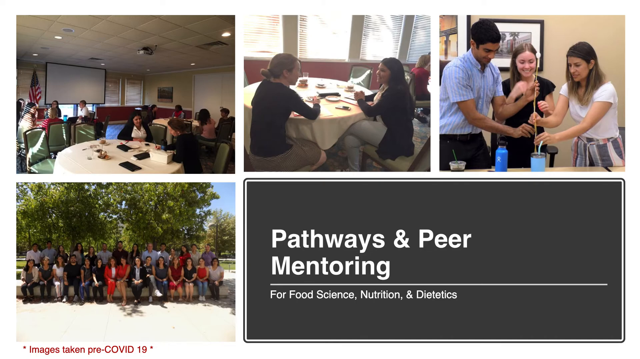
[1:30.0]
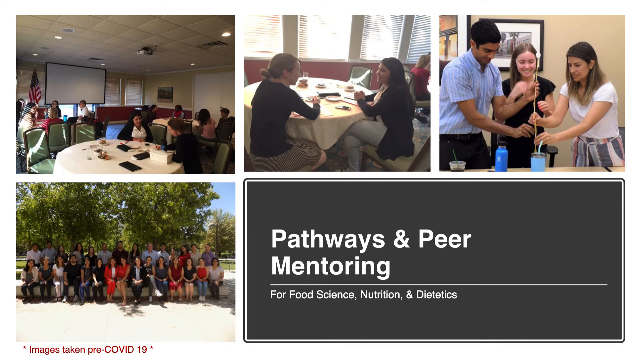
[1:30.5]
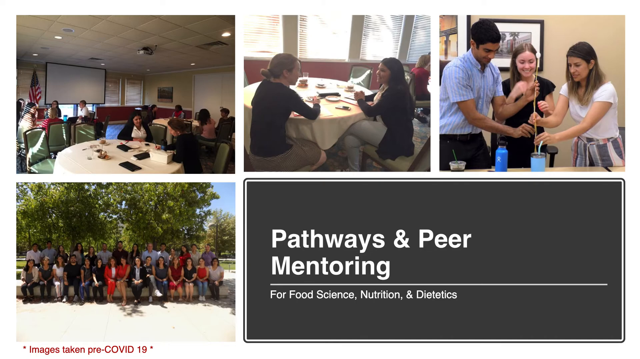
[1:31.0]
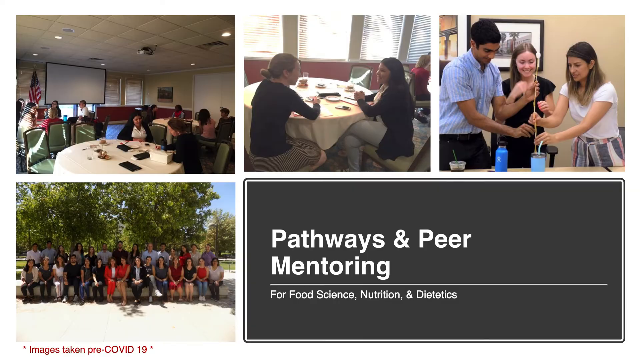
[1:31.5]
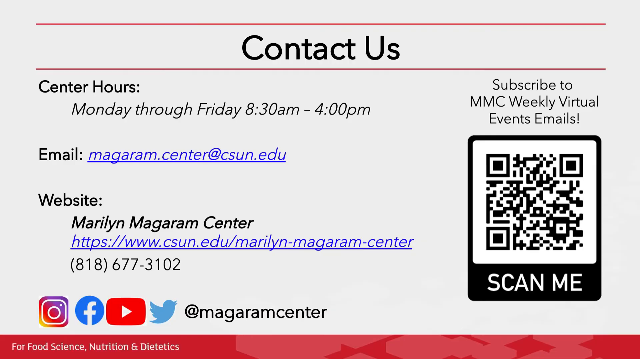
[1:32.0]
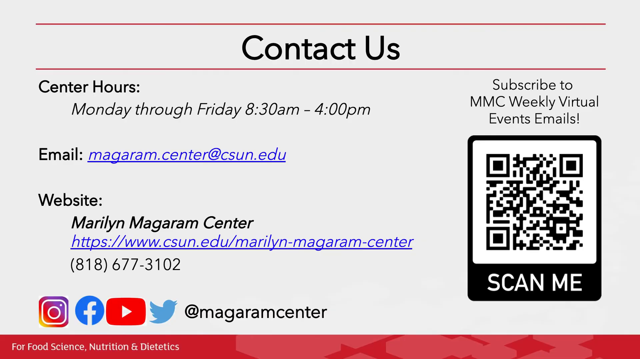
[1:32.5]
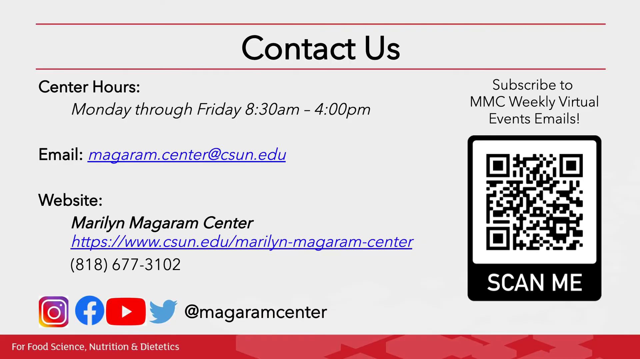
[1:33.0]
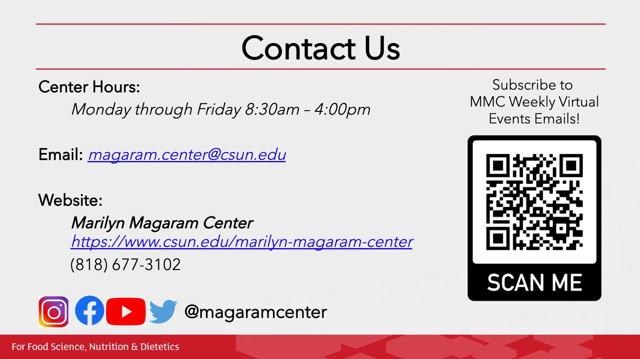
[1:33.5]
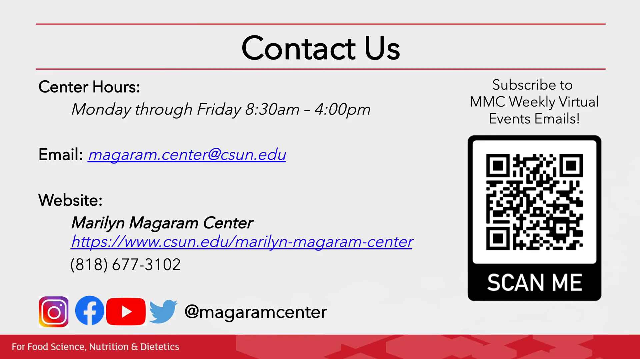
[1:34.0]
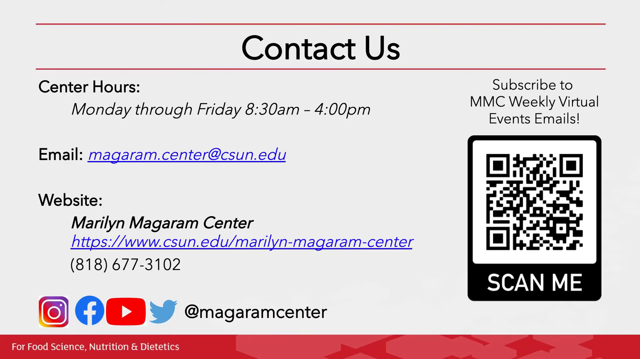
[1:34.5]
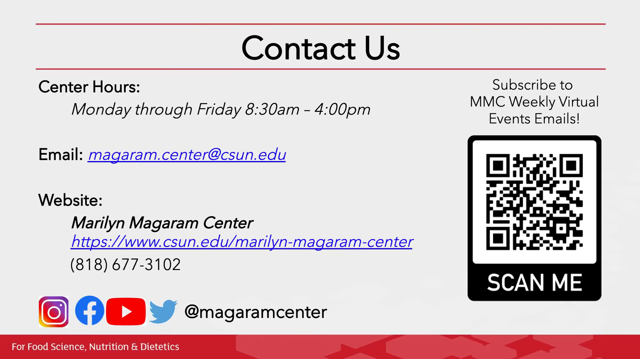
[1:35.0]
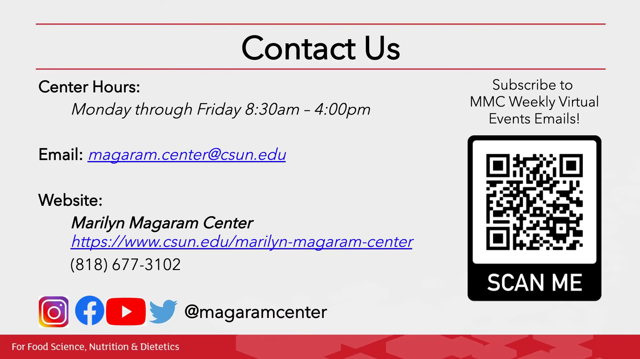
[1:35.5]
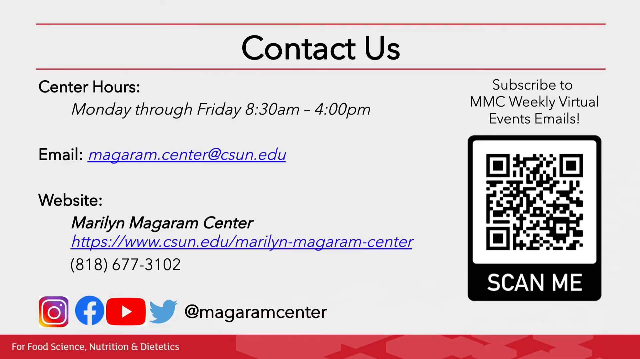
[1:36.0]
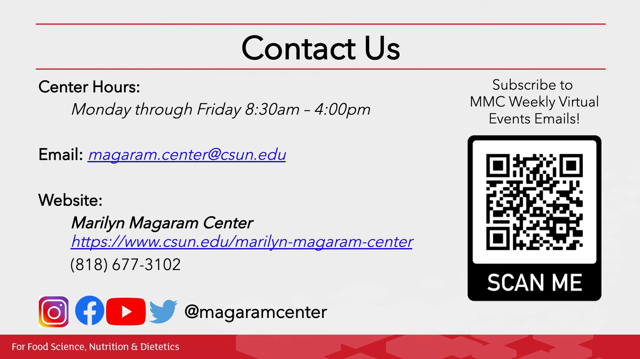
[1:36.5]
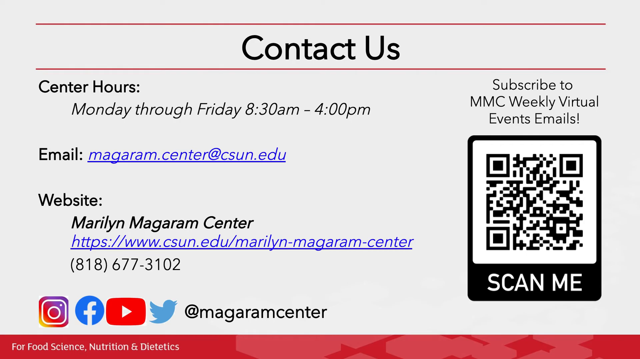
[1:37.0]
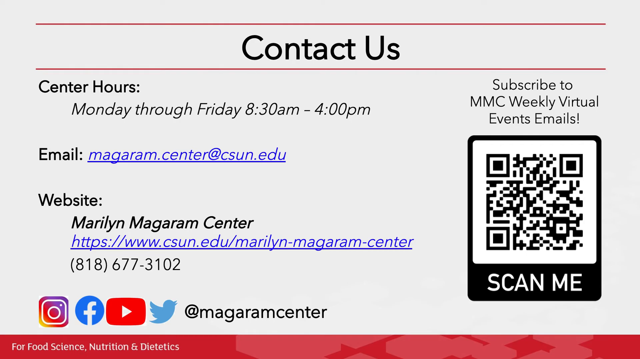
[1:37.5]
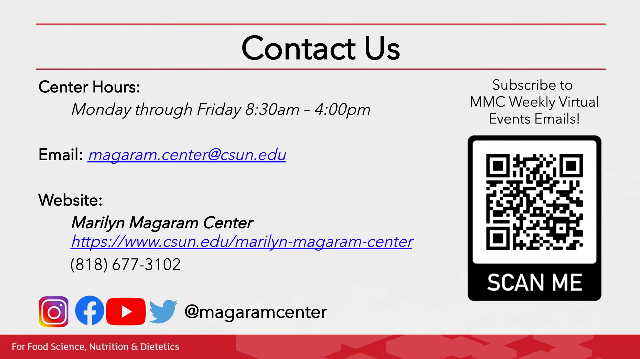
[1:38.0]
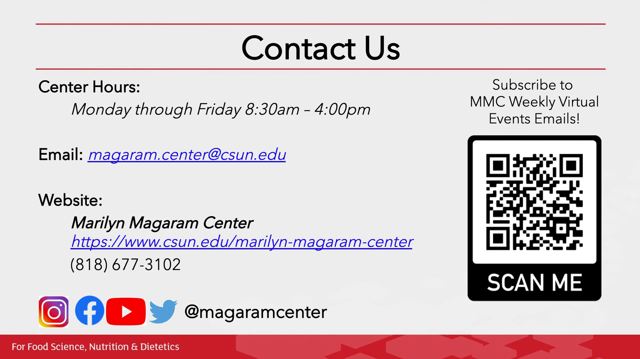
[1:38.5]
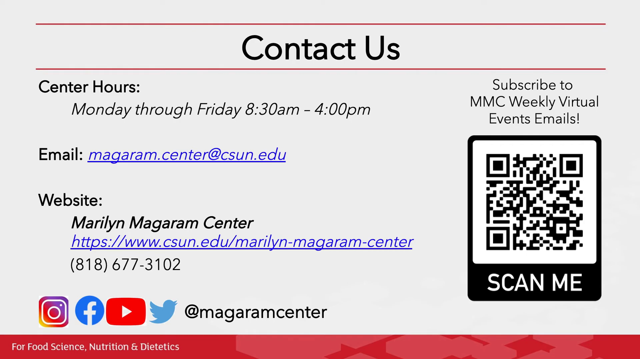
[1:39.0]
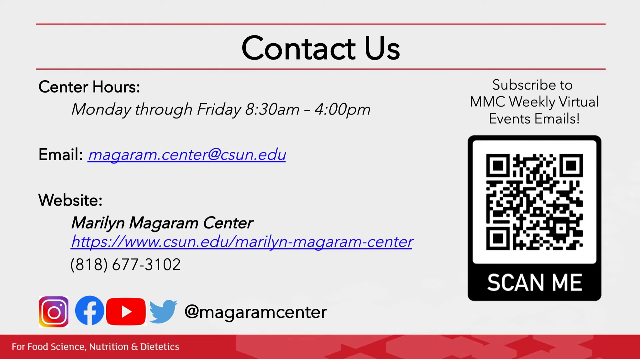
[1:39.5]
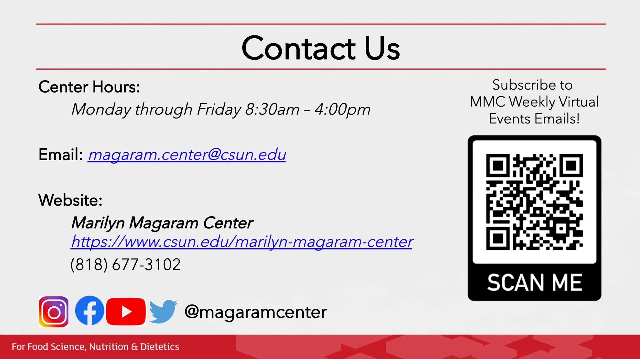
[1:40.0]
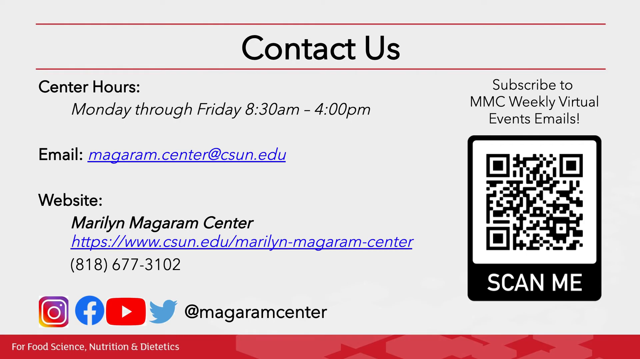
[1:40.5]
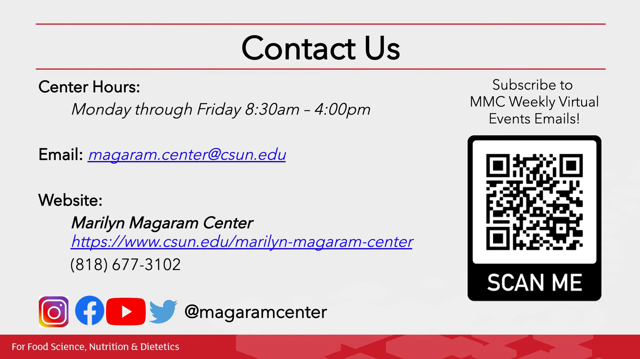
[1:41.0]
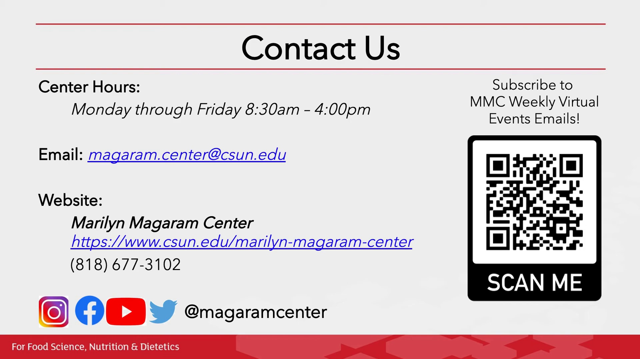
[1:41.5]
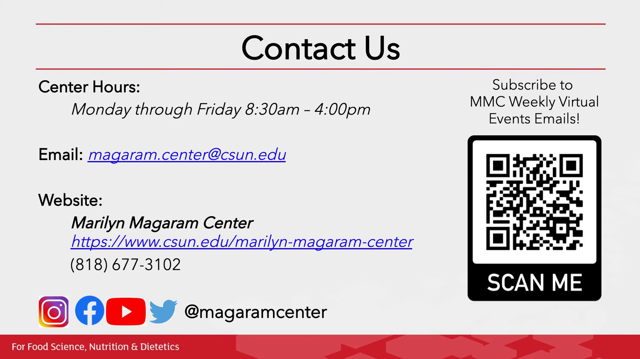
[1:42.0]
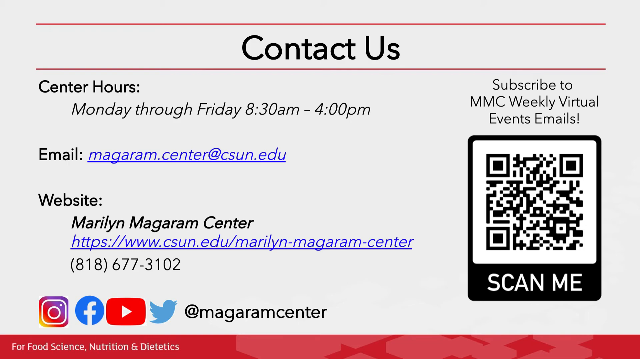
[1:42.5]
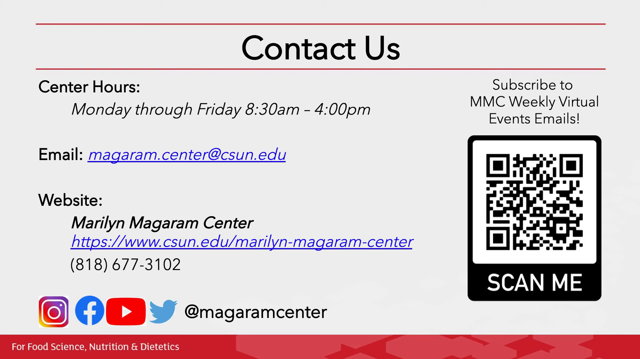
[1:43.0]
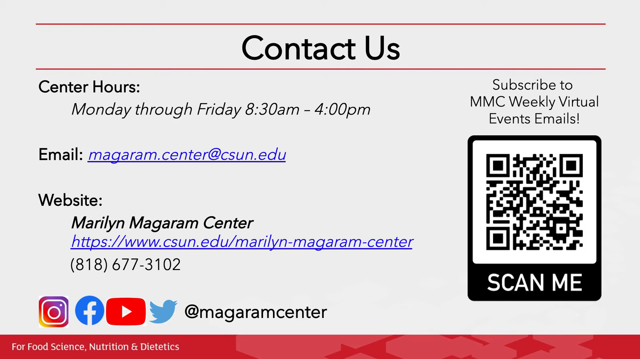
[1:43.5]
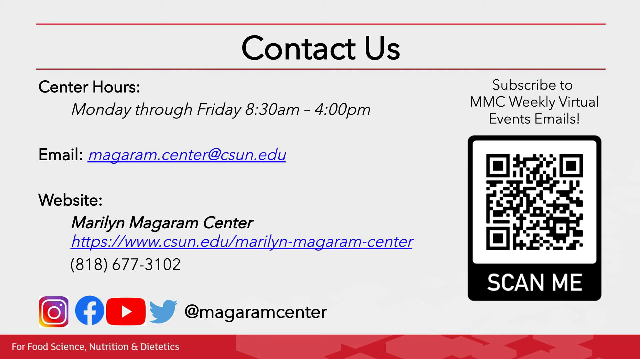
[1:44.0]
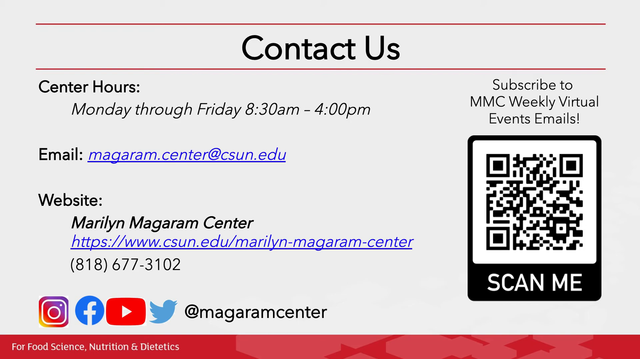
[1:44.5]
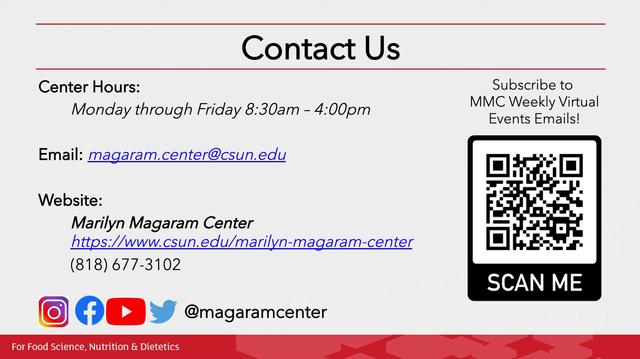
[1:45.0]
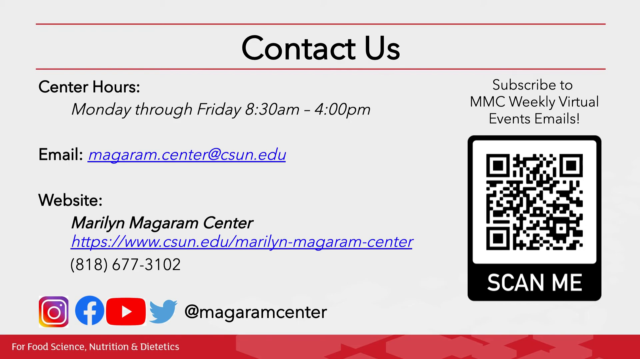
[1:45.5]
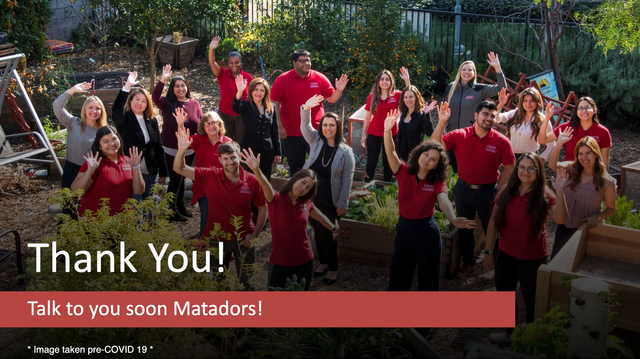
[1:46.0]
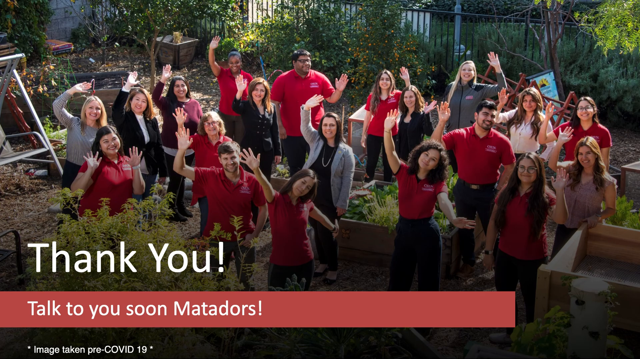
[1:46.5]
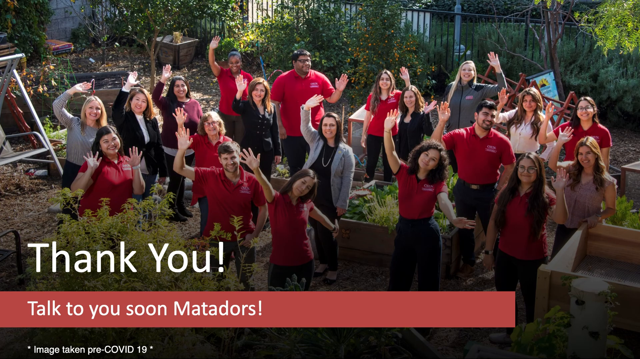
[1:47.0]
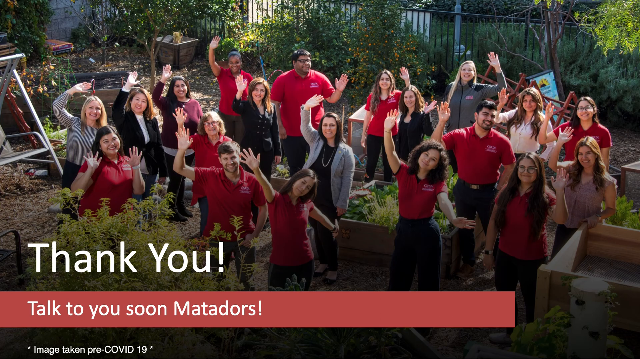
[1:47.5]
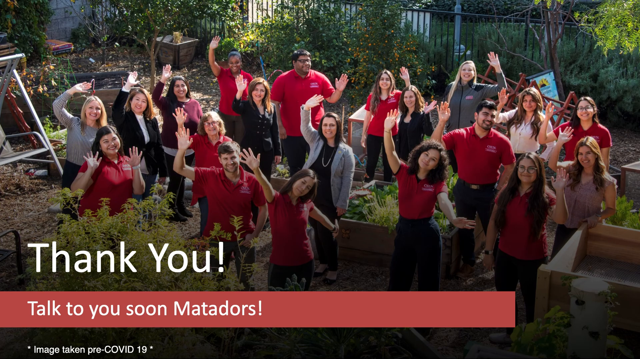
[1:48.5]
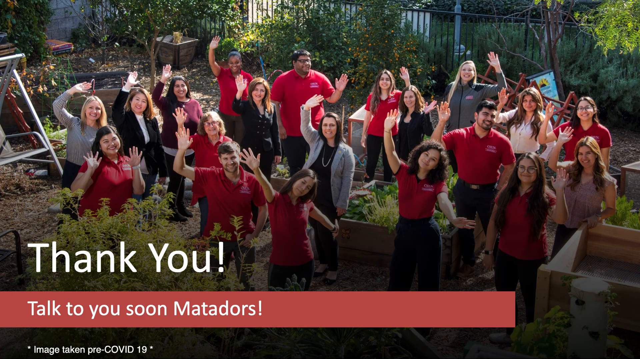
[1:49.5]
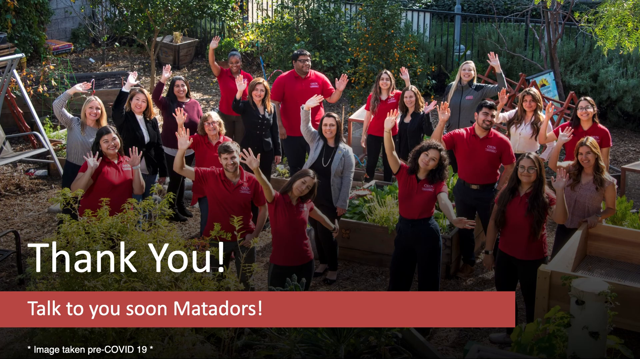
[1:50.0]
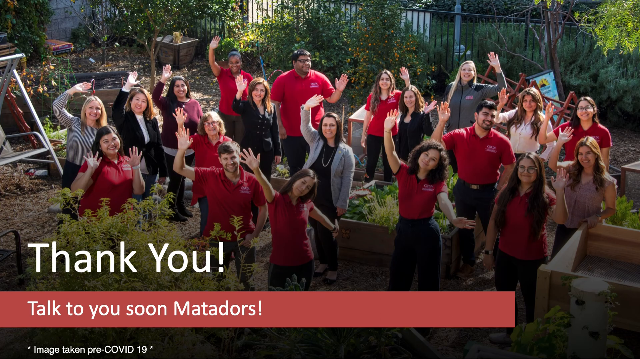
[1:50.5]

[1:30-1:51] The page reads "Pathways and Peer Mentoring for Food, Science, Nutrition, and Dietetics." At the bottom left is a group photo of several men and women, some sitting and some standing in front of a bunch of trees, seemingly in a park or outdoor space. At the top left is a conference or luncheon with people talking around a round table, and what looks like a screen at the front of the room, possibly showing a slideshow or PowerPoint presentation. A close-up image shows two of the people from the first or second photo talking at a round table. To the right of that, three young people, a man and two young women, appear to be working together on some sort of experiment, all holding onto what looks like some sort of stem or long skinny object. The video then shows contact information: "Contact us. Center hours, Monday through Friday, 830 a.m. to 4 p.m. Email magaram.center at csun.edu. Website, Maryland Magaram Center, www.csun.edu/Maryland Magaram Center."